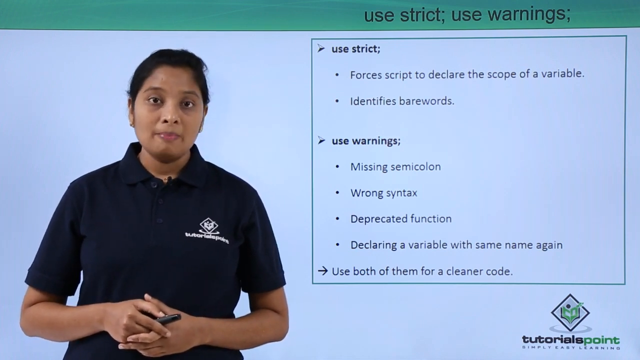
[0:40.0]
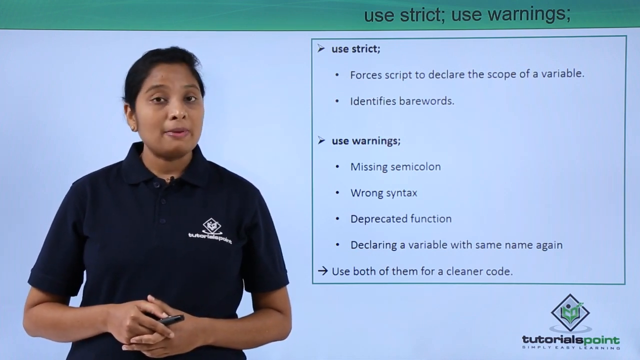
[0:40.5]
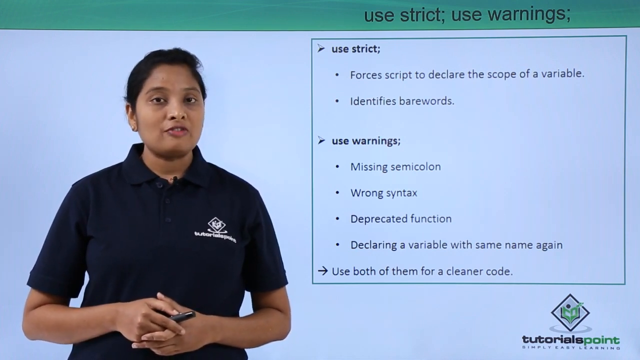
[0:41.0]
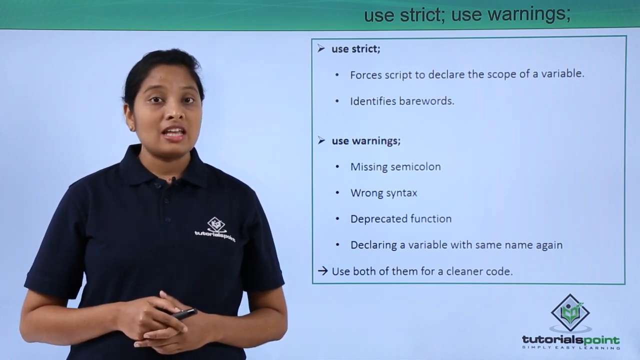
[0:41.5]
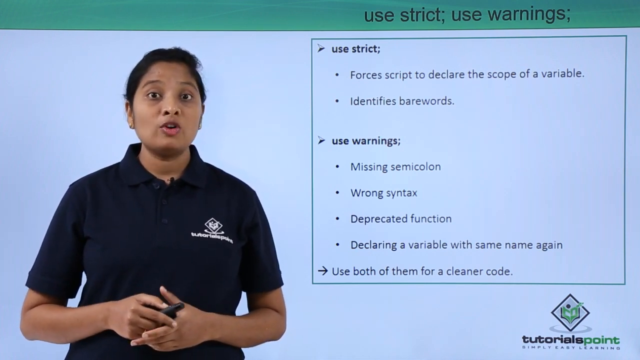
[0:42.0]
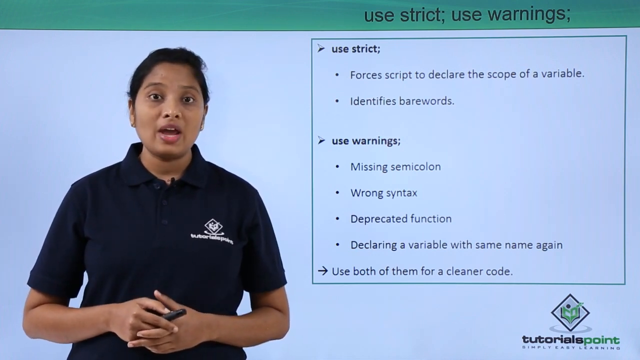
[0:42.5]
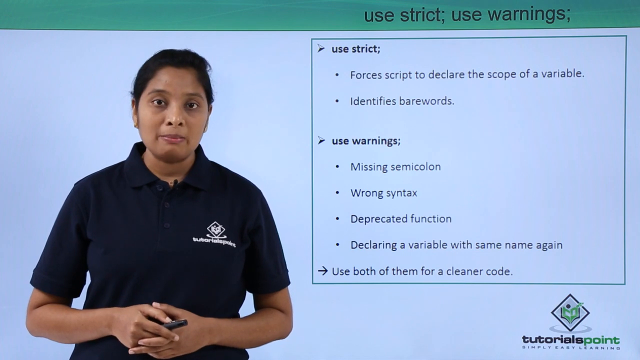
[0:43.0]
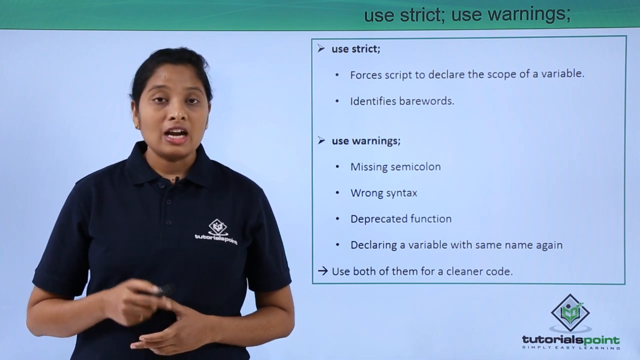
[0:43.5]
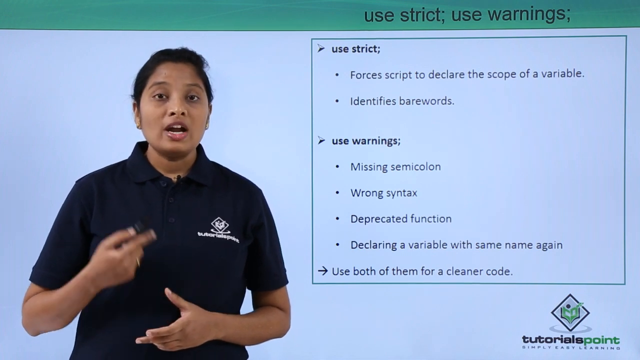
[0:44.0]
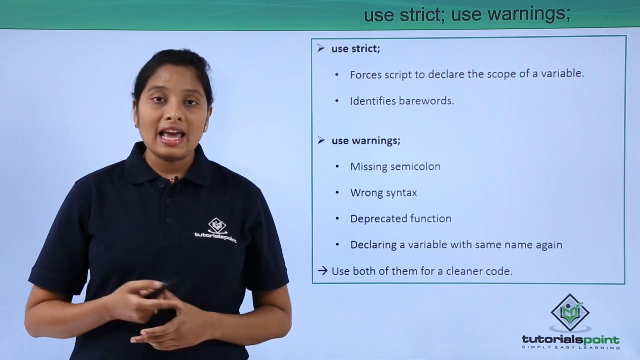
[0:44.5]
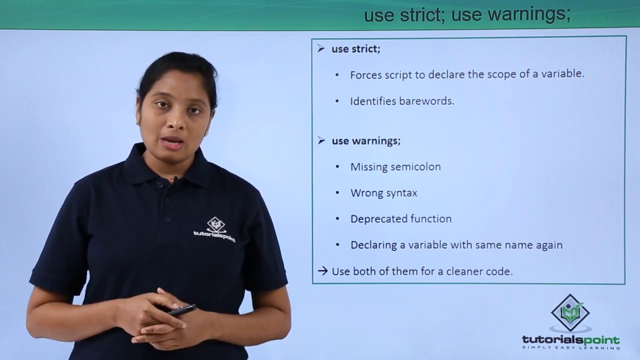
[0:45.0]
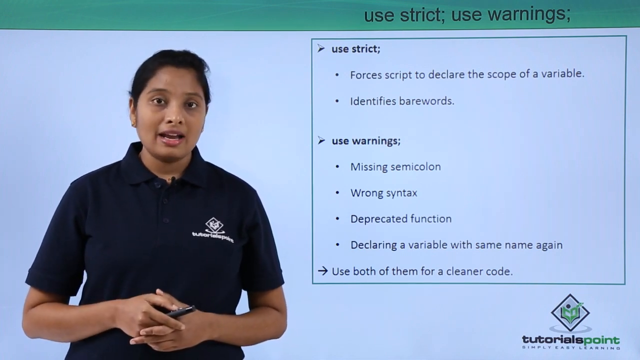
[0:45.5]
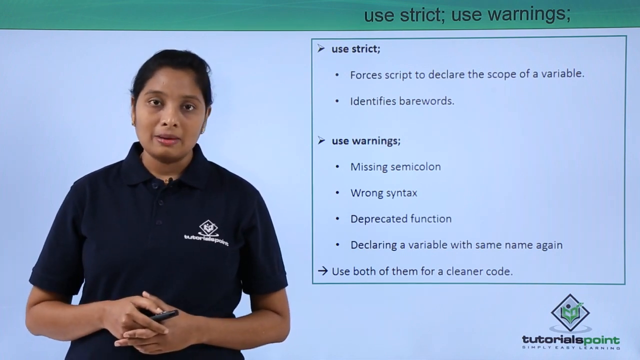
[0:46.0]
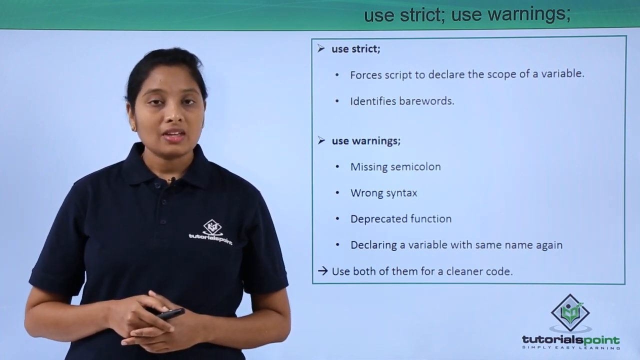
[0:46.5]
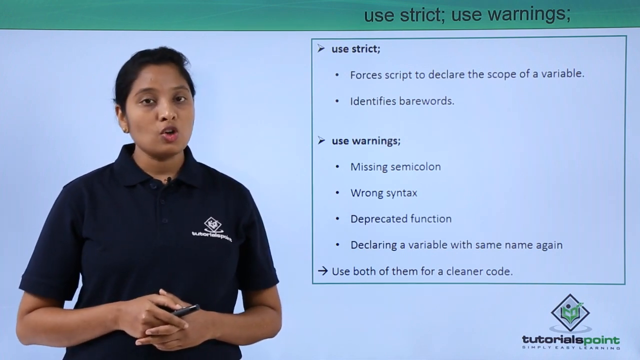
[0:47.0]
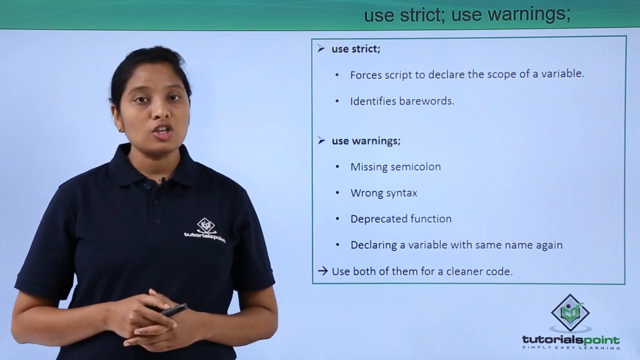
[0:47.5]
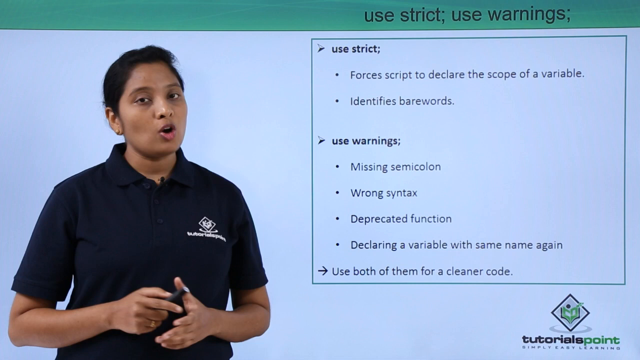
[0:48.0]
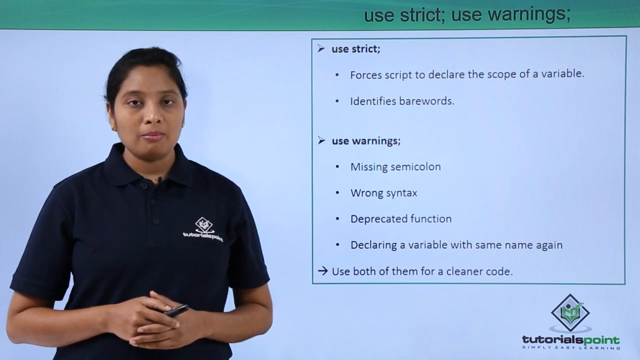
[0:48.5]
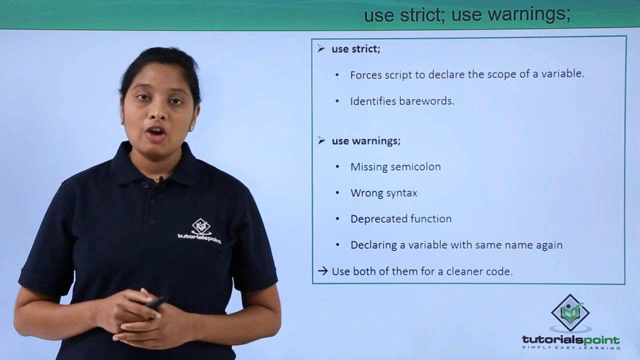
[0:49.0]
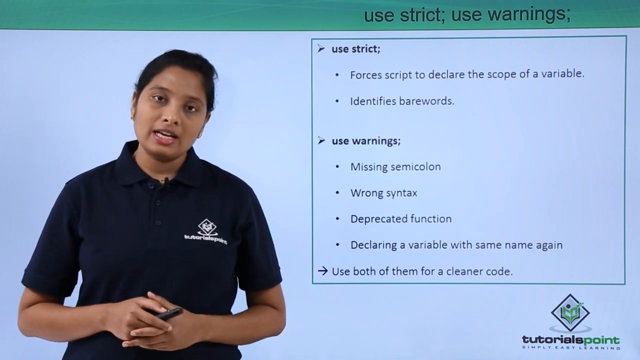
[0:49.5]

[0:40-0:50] A light blue screen appears with a turquoise bar running across the upper portion from left to right. On the right side of the bar are the words "use strict, use warnings". On the light blue area, a box on the right side of the video is outlined in blue, its inside looking like the same blue background as the rest of the screen. Words written in purple read "use strict;". Beneath it, the first bullet point reads "forces script to declare the scope of a variable", and the bullet point under that reads "identifies bare words".